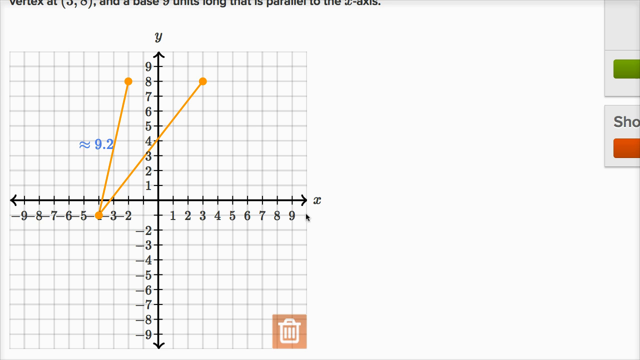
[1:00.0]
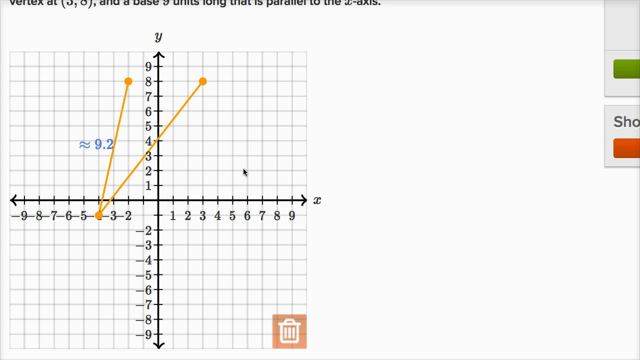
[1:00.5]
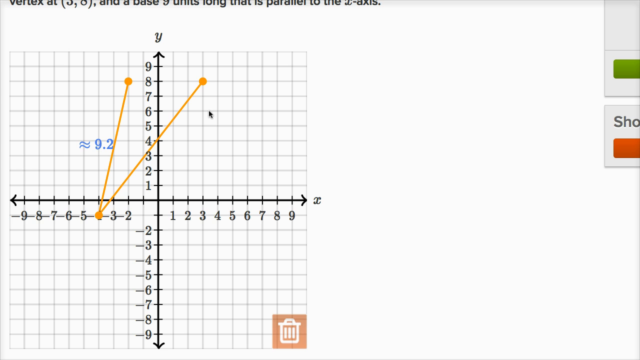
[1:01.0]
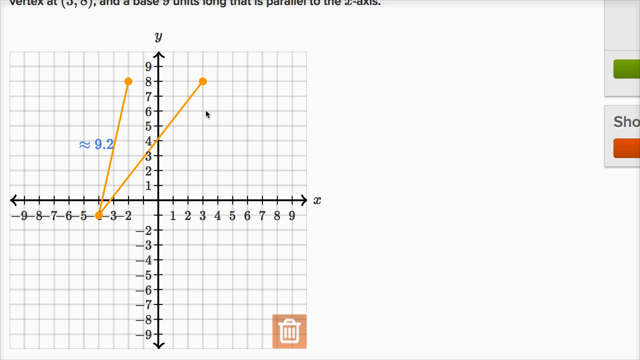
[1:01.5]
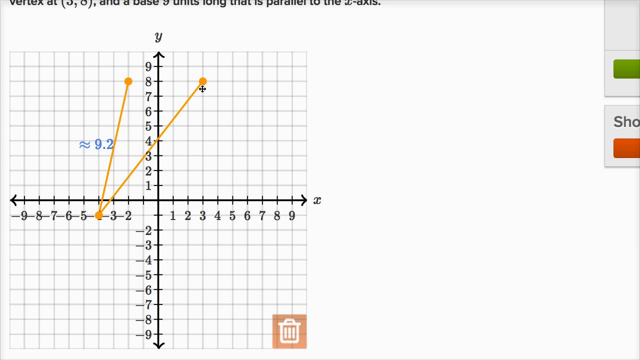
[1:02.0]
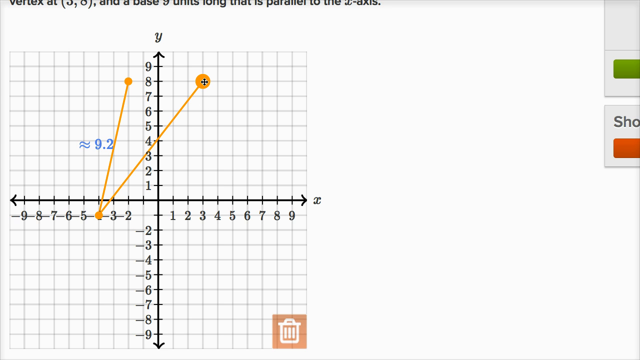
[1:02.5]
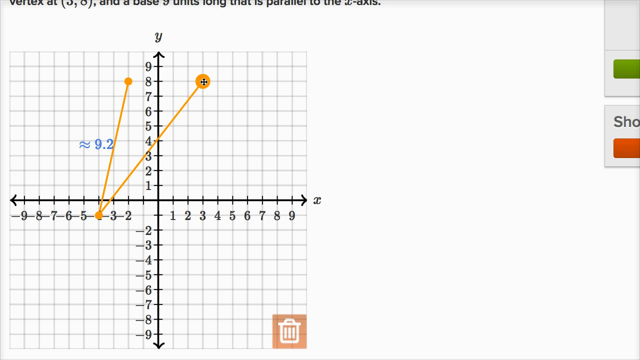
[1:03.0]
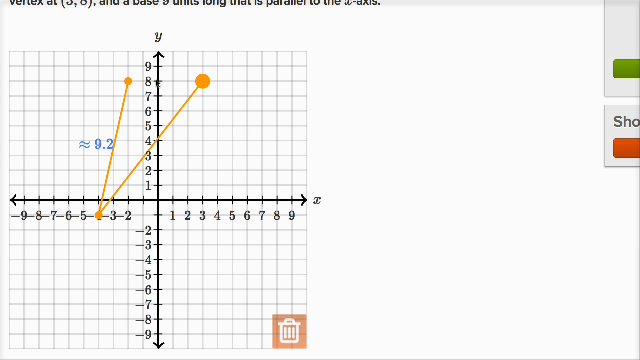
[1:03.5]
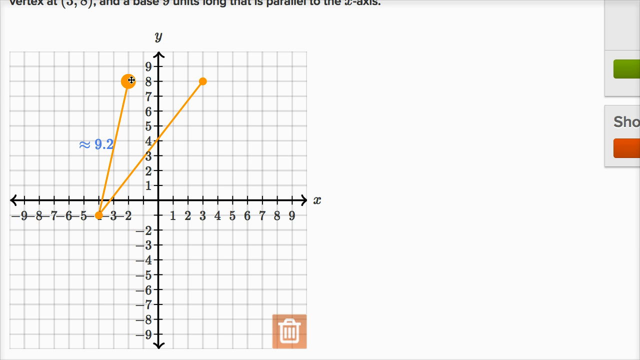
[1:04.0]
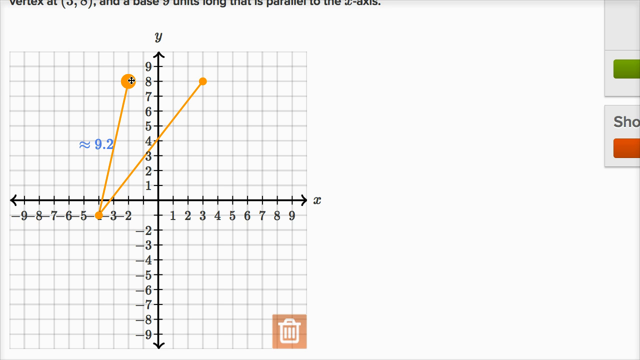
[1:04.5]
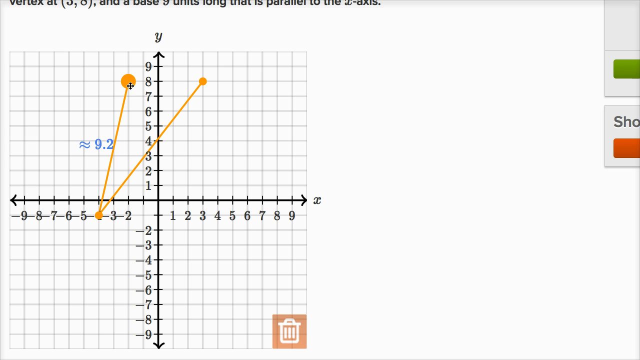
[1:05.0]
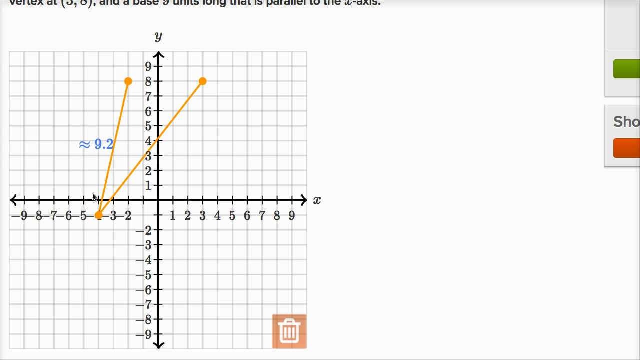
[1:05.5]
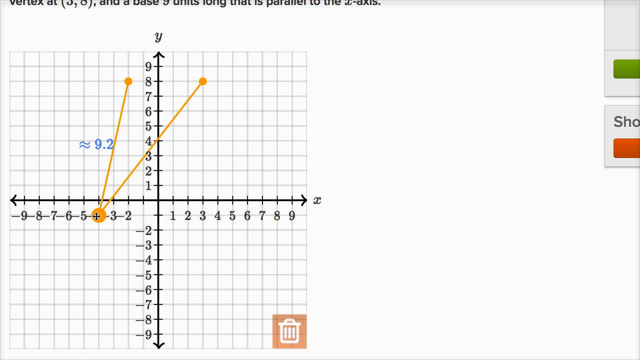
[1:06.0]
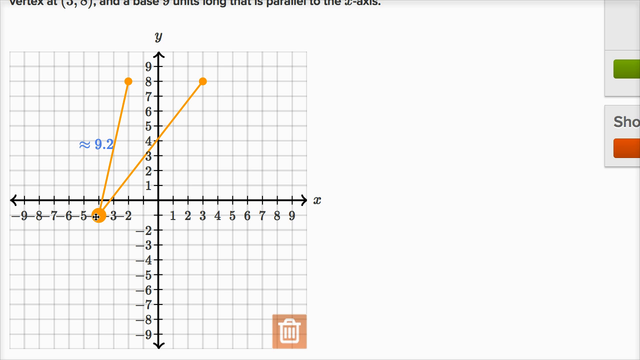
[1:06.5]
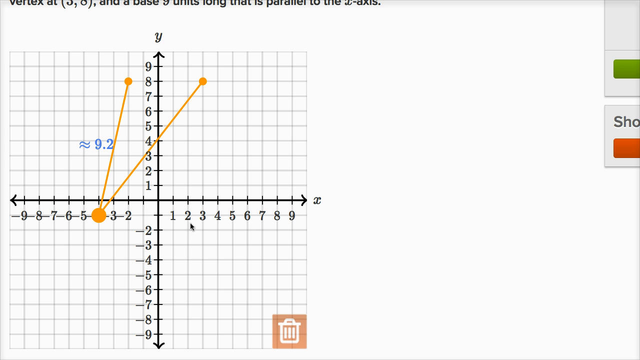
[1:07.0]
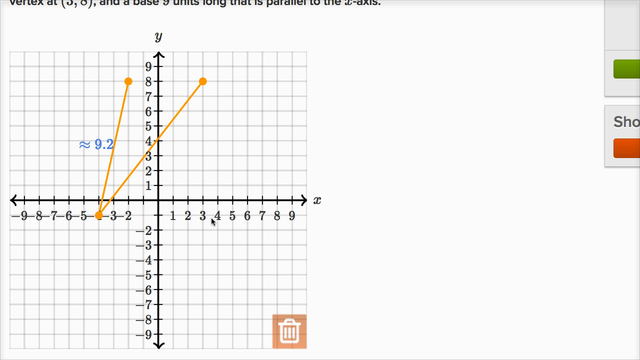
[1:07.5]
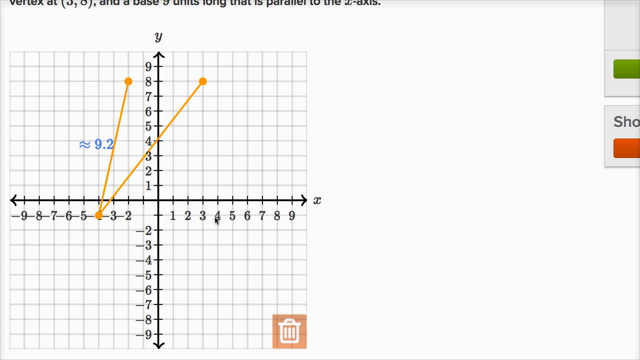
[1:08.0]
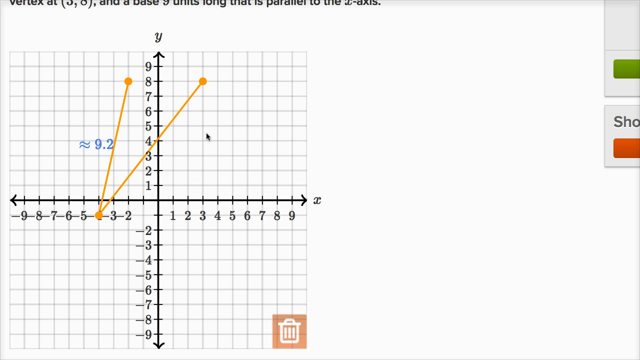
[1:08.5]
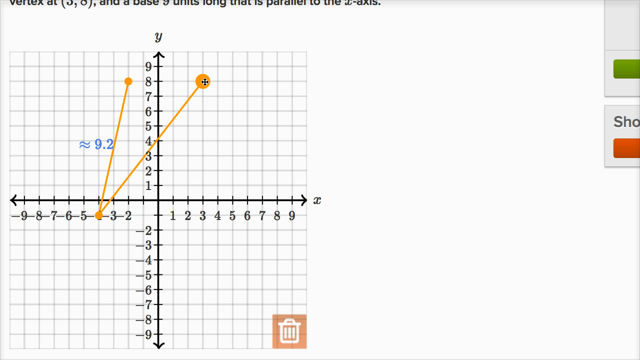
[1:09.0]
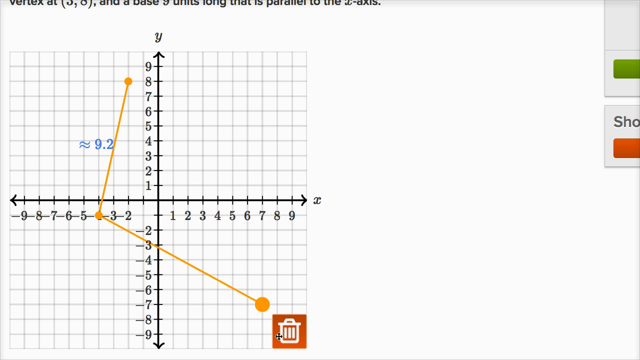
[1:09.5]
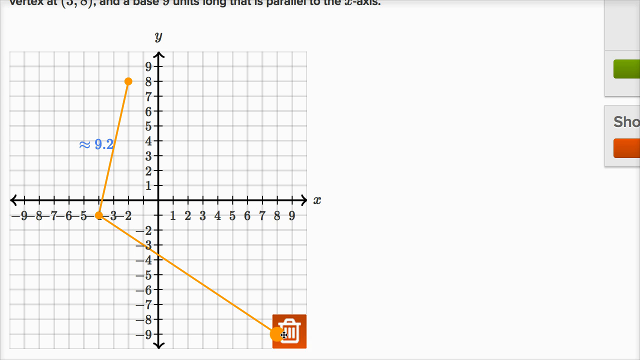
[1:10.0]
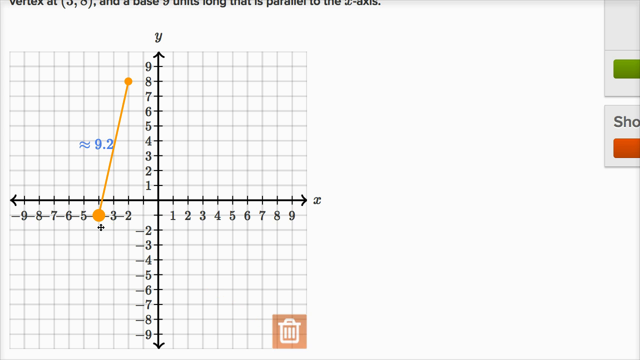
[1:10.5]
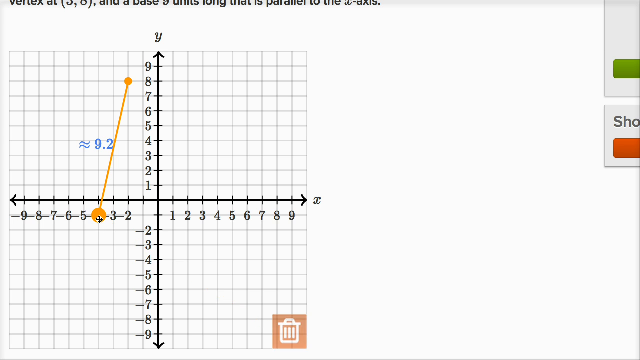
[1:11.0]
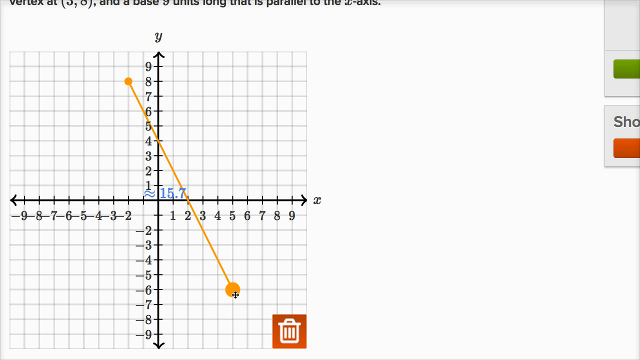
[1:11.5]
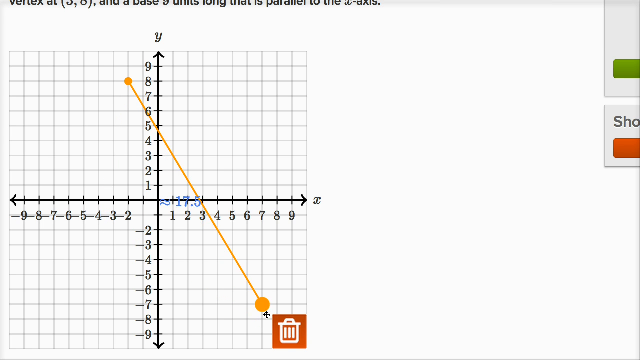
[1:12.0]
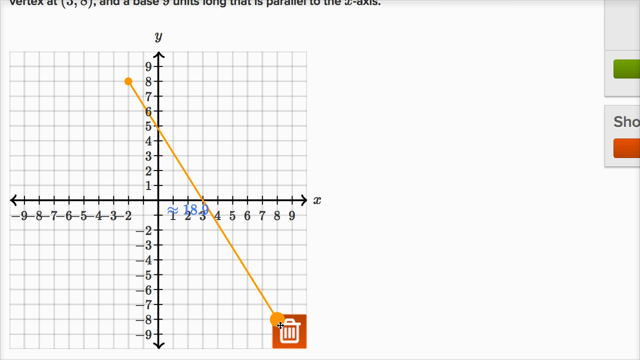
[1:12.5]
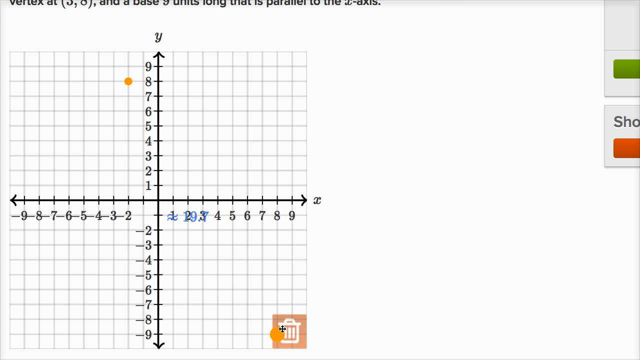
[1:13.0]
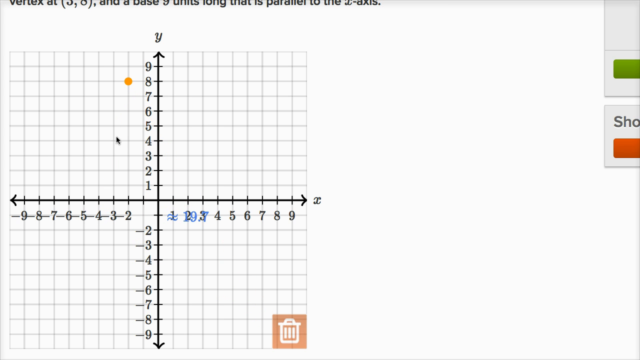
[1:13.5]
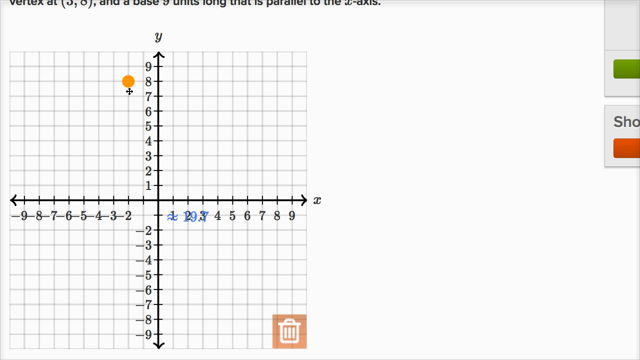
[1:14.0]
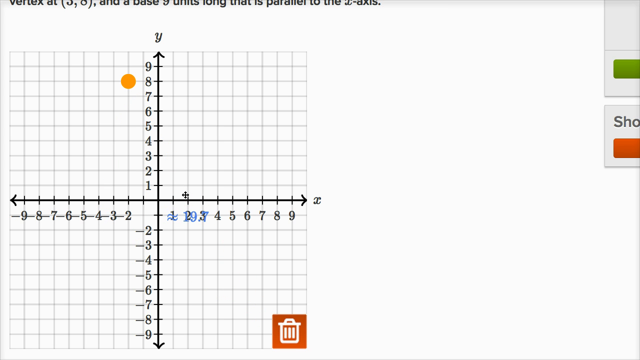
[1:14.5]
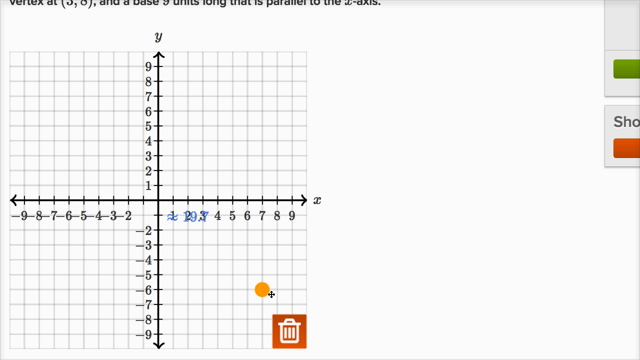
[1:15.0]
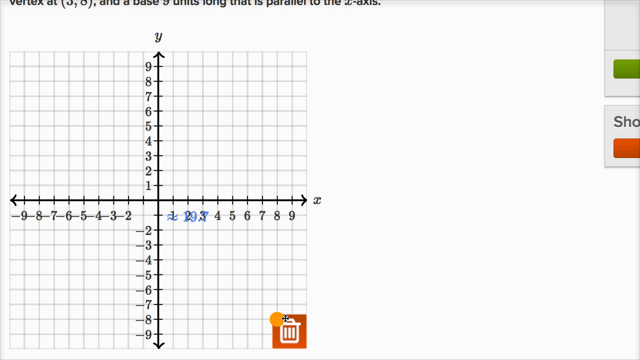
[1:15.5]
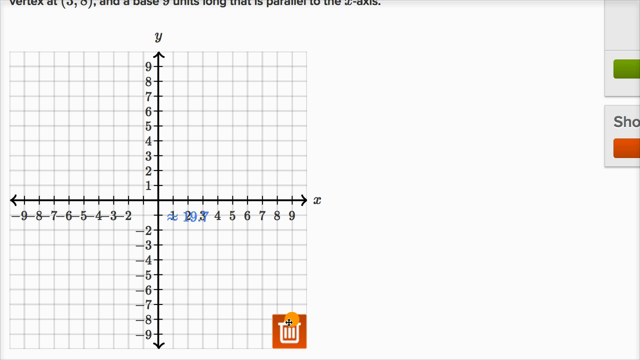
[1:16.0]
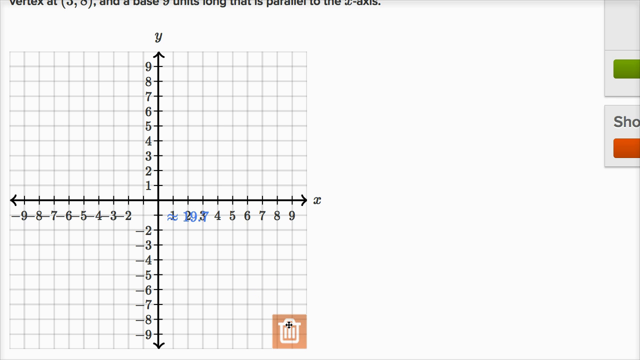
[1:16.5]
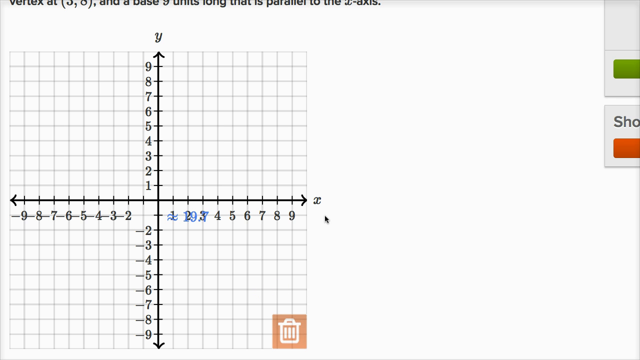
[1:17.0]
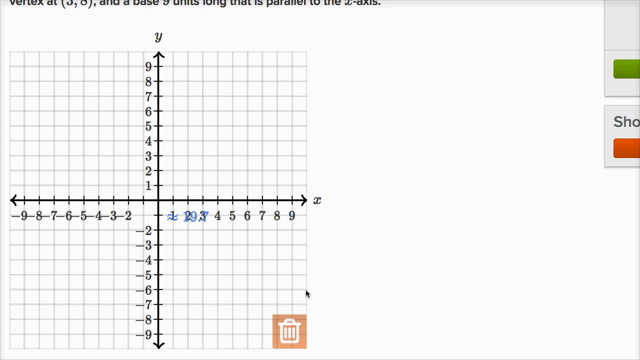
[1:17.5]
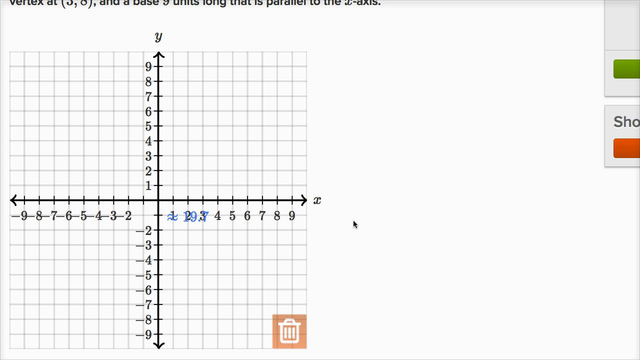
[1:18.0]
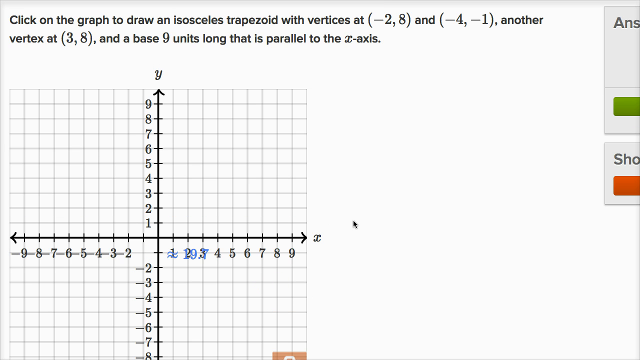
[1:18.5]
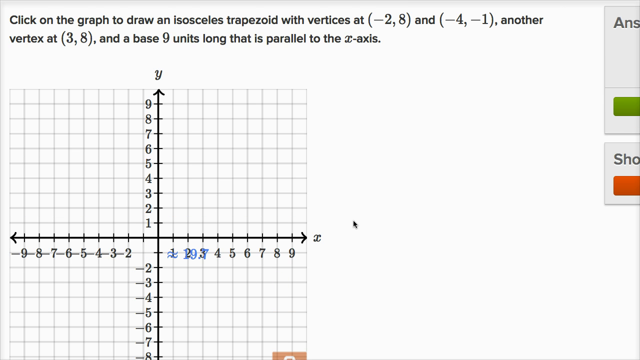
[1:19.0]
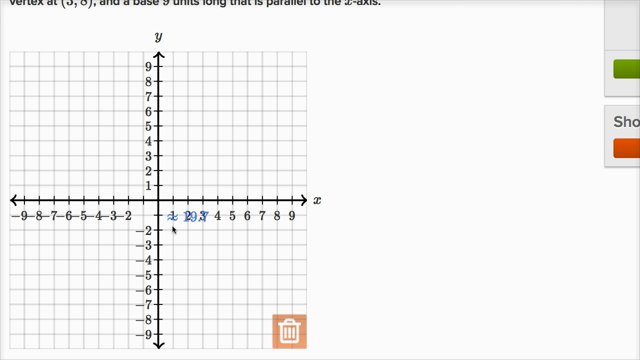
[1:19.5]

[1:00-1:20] The graph is still being drawn, with one orange line running from the top down to the bottom number 1. The vertices listed are (-2, 8) and (-4, -1), with another vertex at (3, 8) and a base parallel to the x-axis. The instruction to create vertices is in the middle of the graph, and the horizontal axis has the numbers.